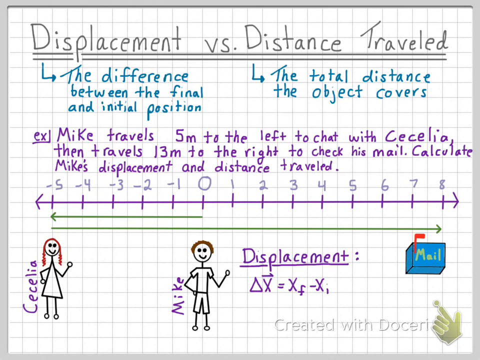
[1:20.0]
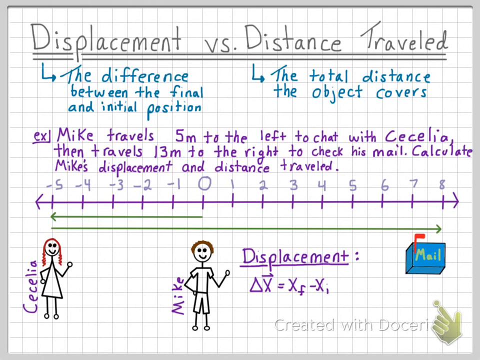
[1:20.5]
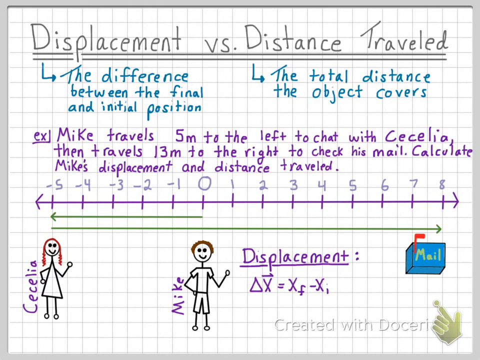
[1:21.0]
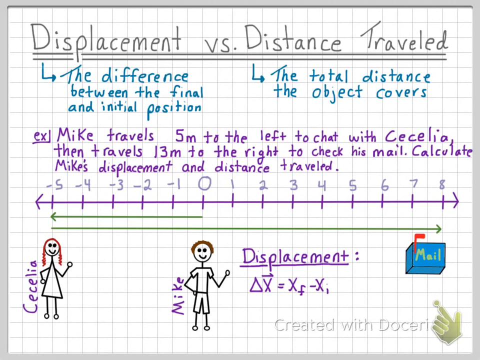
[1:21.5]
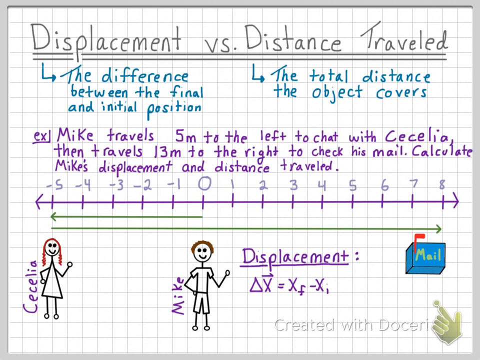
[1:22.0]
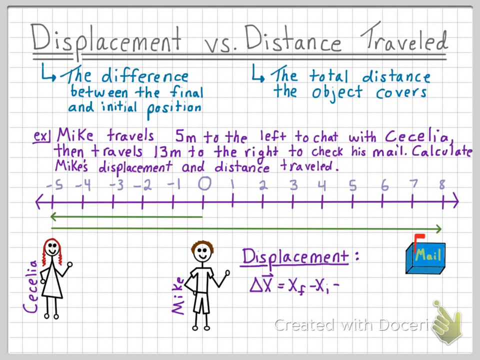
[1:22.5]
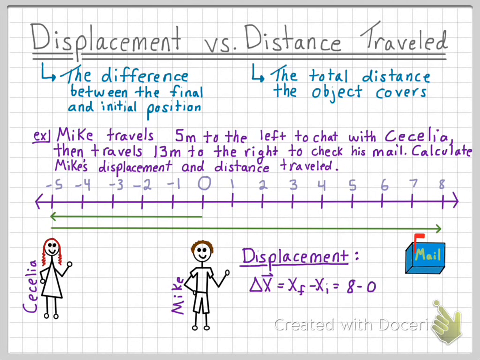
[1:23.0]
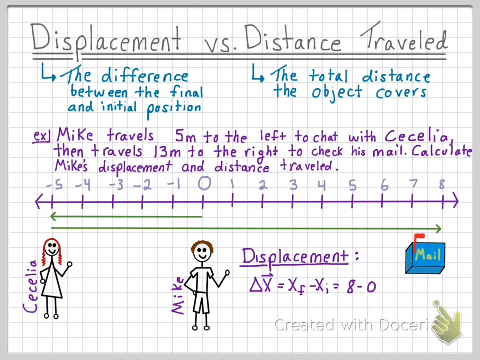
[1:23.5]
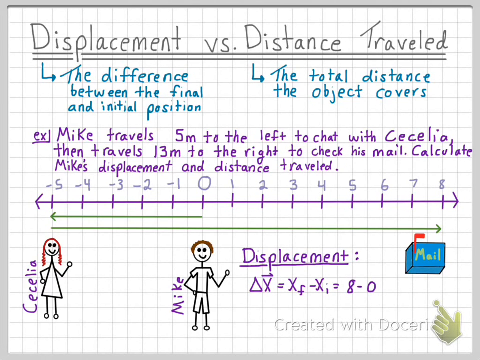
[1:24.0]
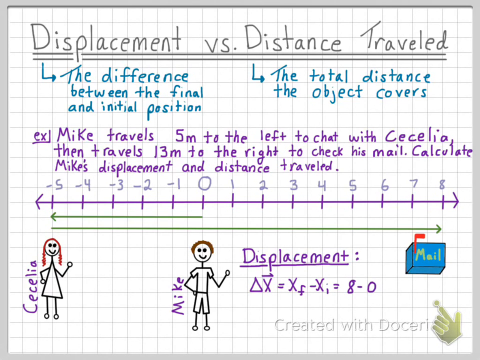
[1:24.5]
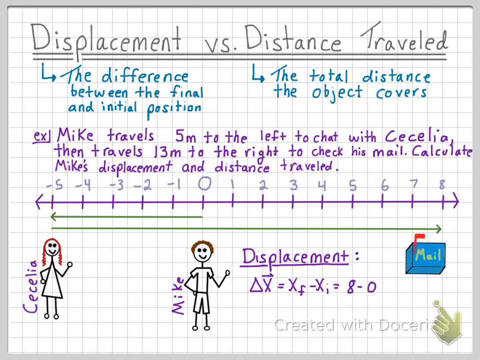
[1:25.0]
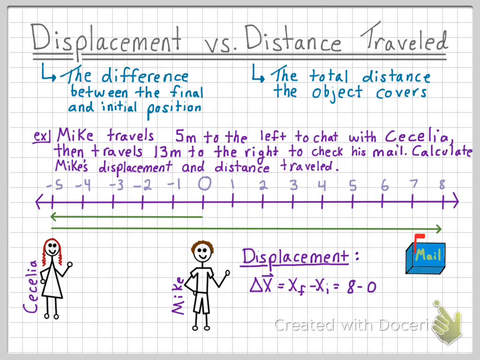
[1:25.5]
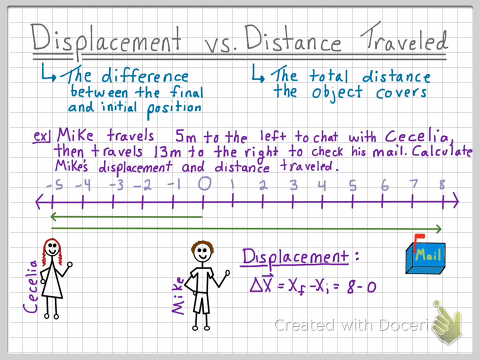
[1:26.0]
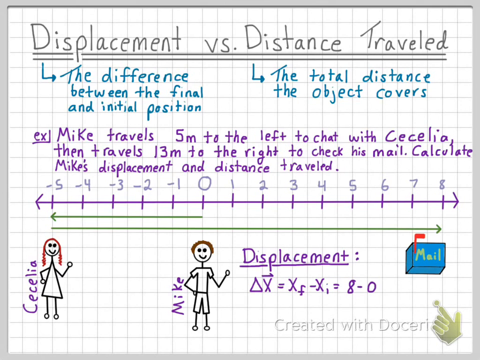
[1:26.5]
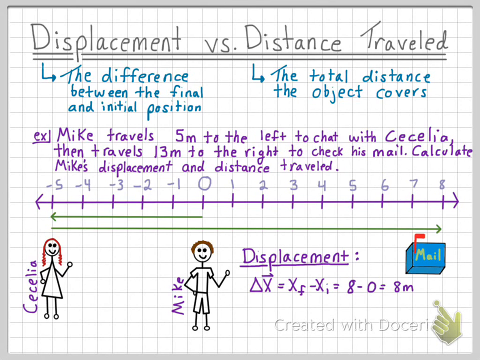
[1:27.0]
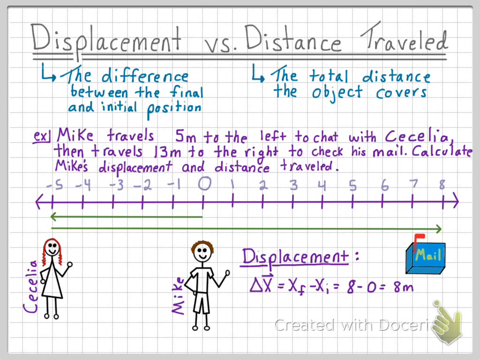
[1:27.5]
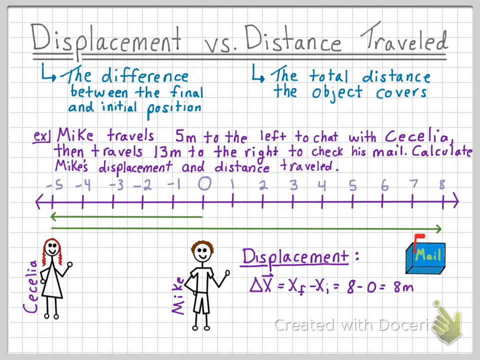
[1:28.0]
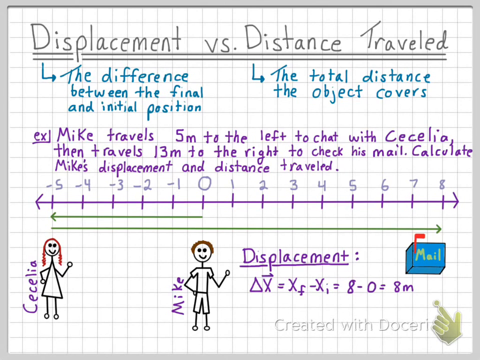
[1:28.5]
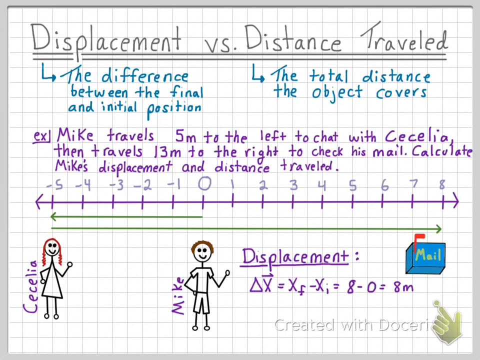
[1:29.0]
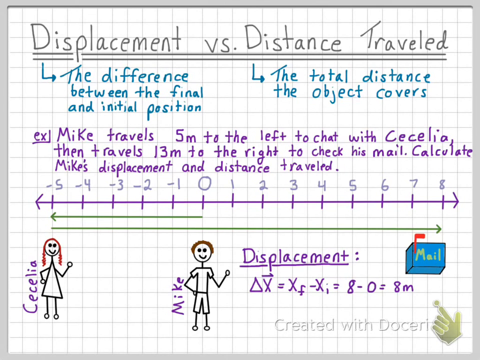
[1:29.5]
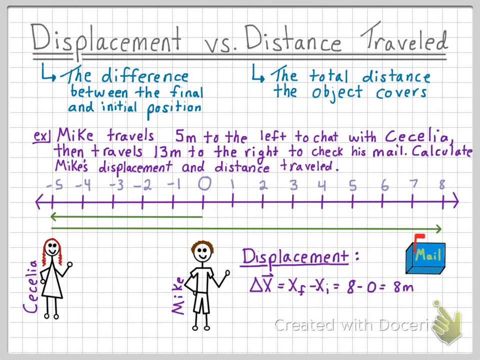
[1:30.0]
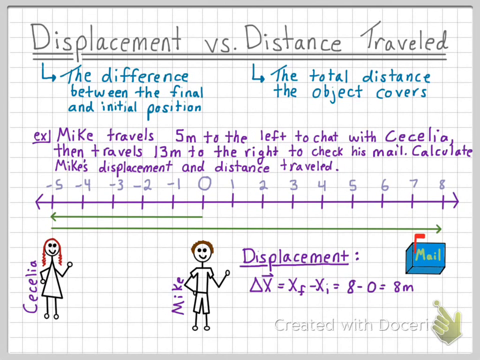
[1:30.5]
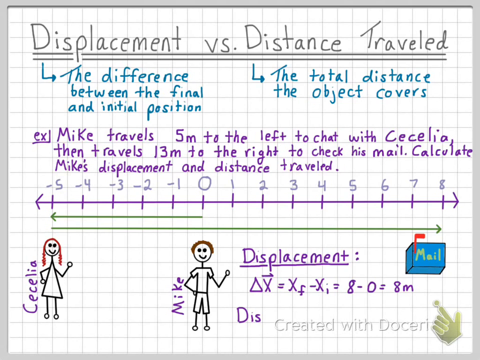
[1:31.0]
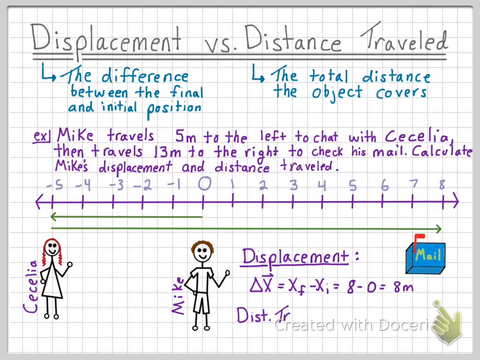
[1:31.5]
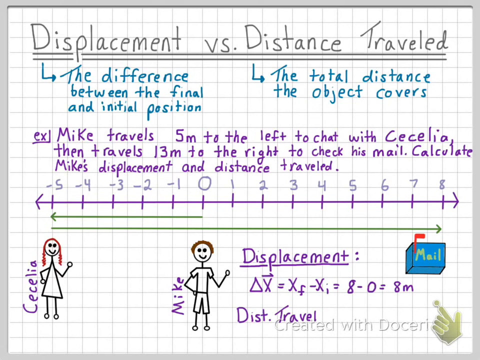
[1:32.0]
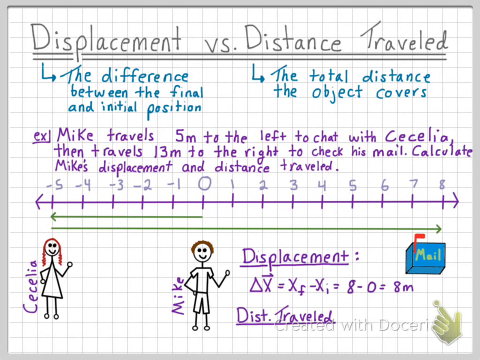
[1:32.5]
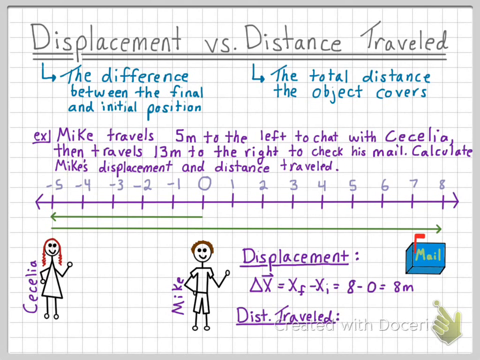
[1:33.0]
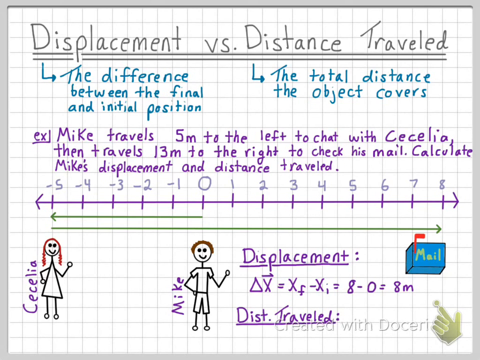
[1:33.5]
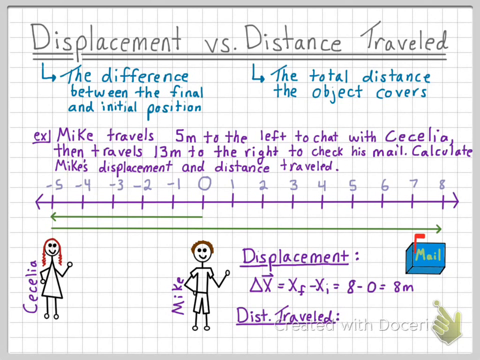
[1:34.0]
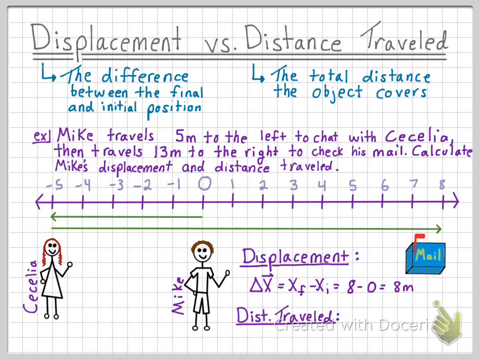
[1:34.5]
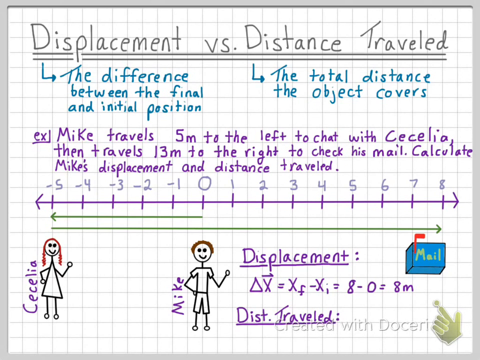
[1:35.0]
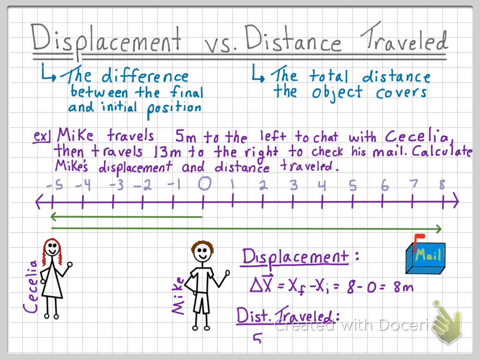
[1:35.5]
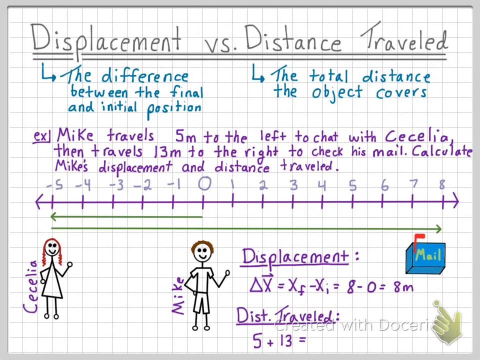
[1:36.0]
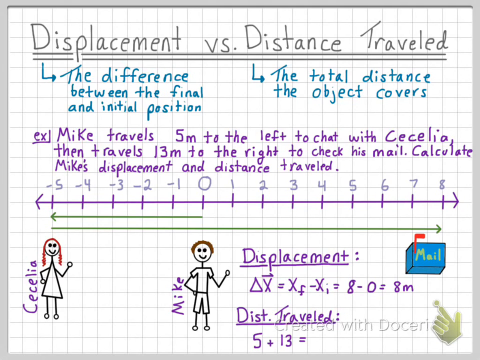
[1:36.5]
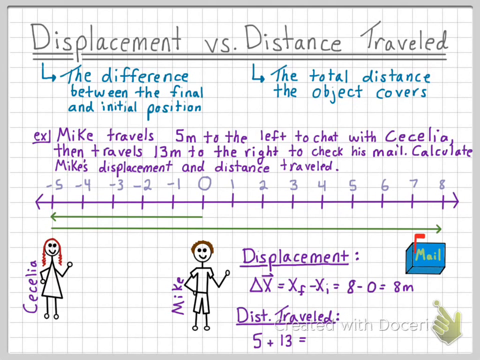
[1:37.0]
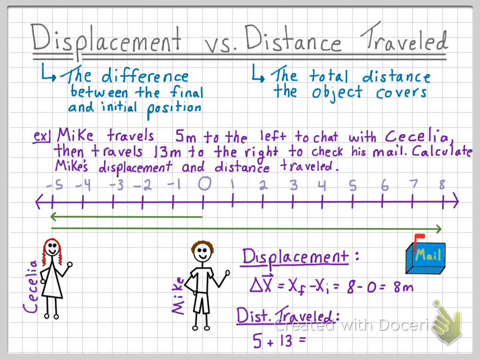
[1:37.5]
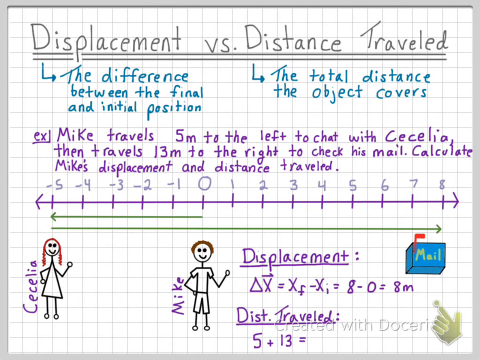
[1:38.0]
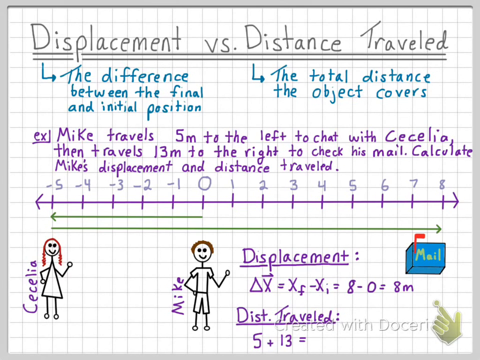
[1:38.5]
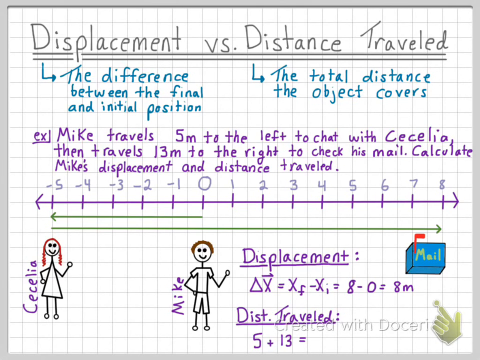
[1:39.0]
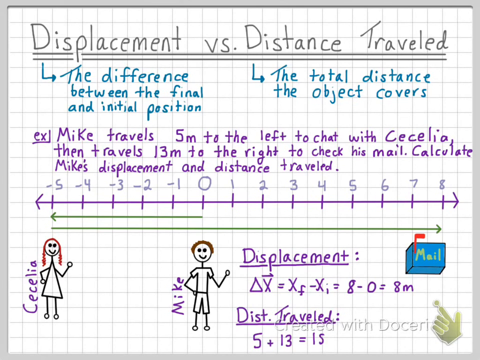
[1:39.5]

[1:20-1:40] The white grid board shows the same information: the two characters Mike and Cecilia and the line graph. A formula for displacement appears, x sub f minus x sub i, which equals 8 minus 0, giving 8 meters. Then the distance traveled is shown as 5 plus 13, which equals 18 meters, as Mike walked over to Cecilia and then both walked to the mailbox.